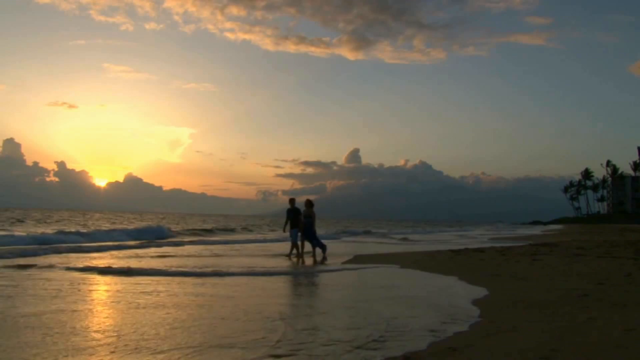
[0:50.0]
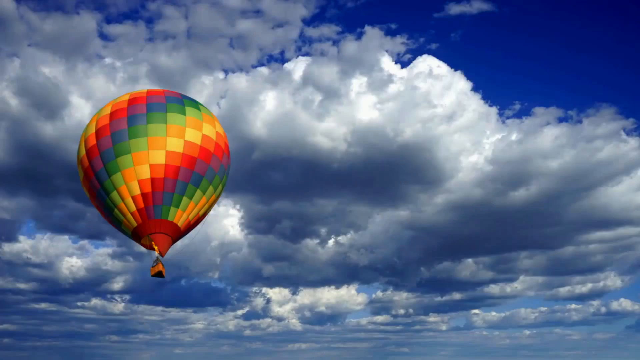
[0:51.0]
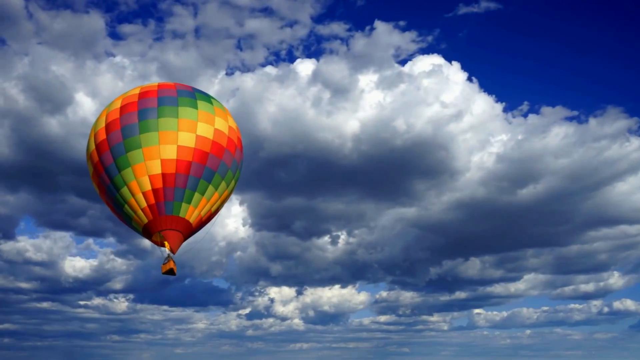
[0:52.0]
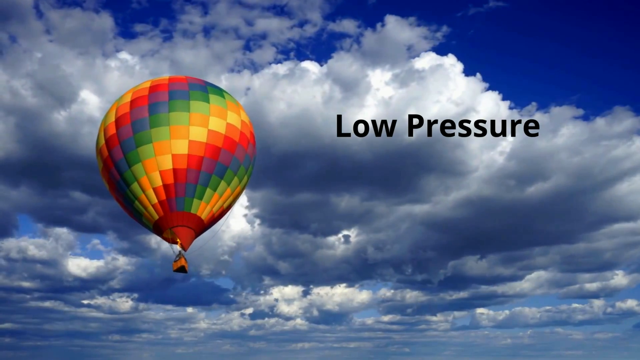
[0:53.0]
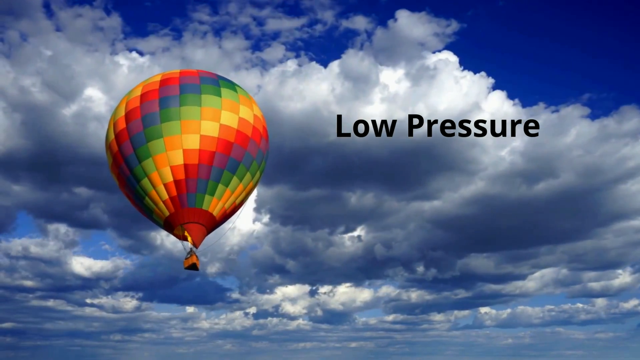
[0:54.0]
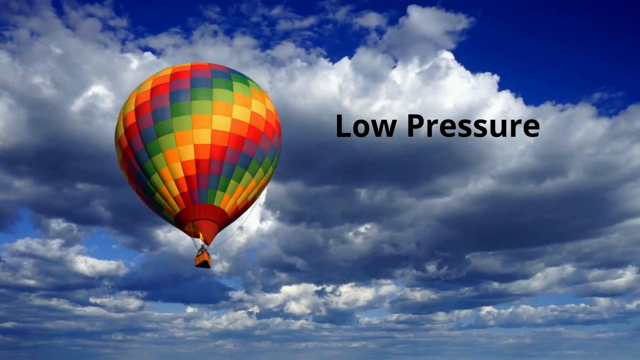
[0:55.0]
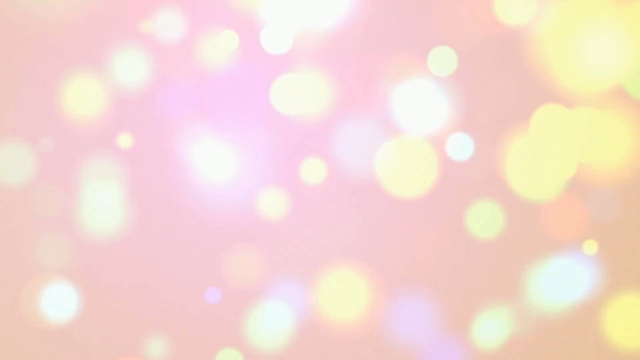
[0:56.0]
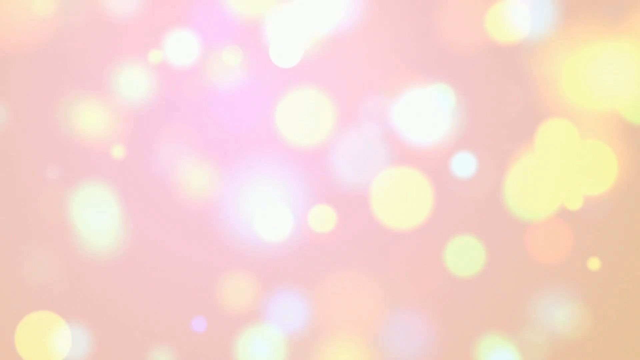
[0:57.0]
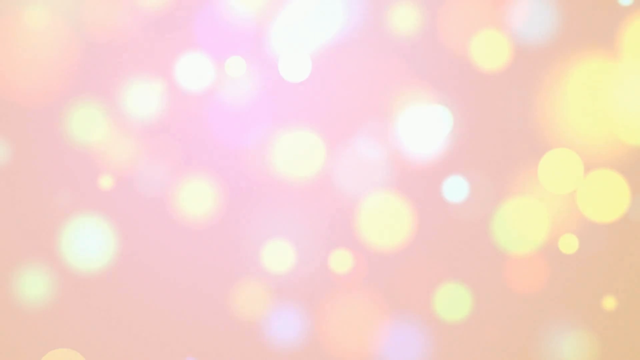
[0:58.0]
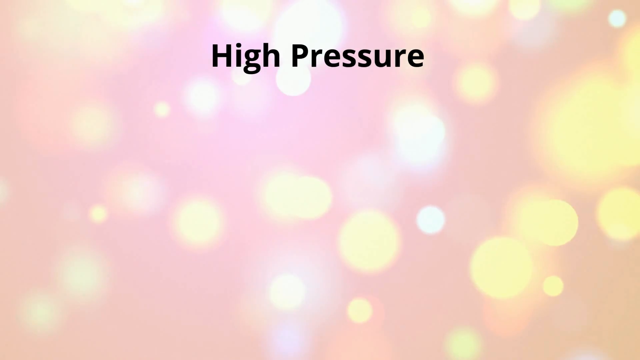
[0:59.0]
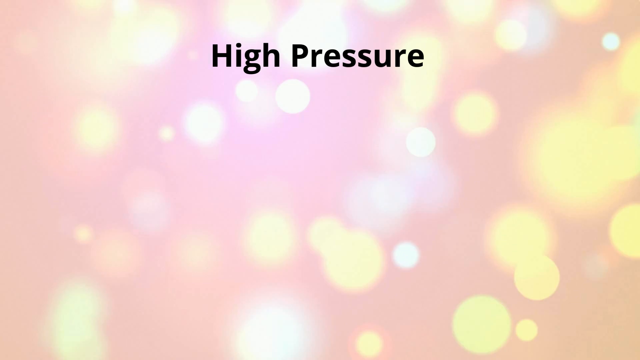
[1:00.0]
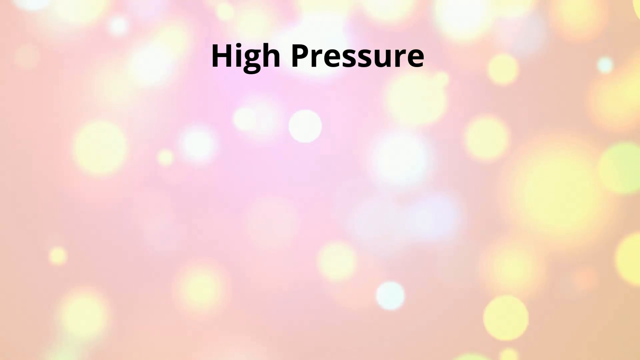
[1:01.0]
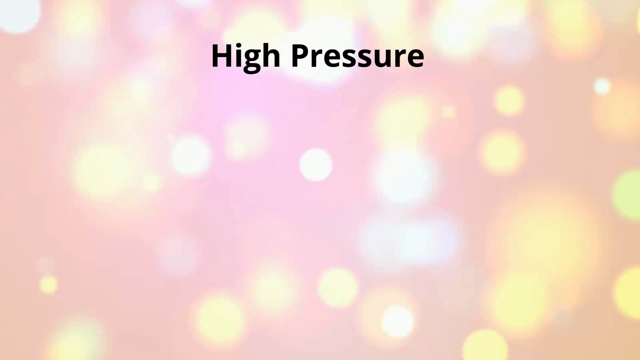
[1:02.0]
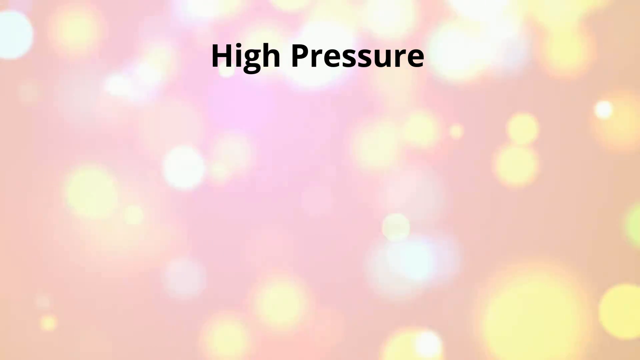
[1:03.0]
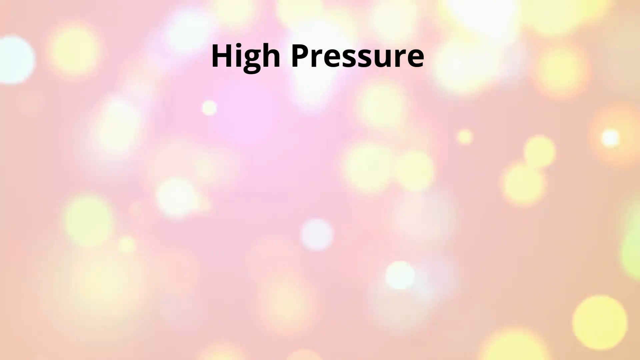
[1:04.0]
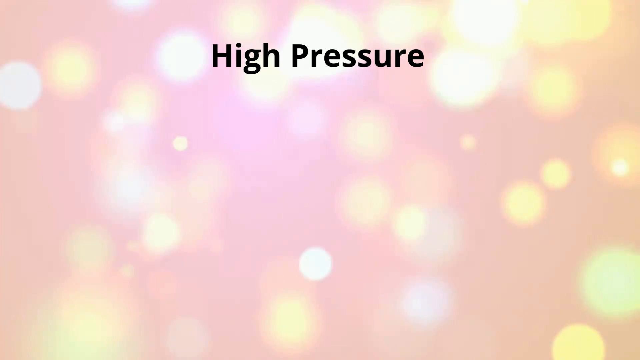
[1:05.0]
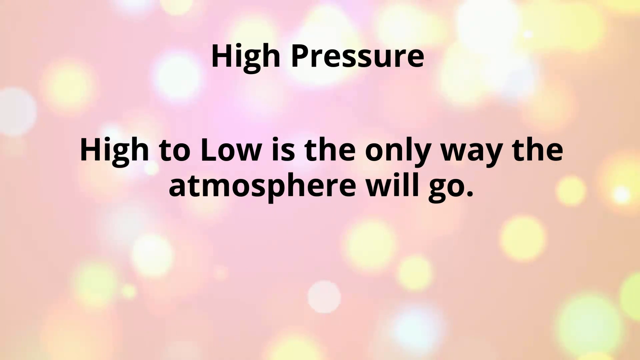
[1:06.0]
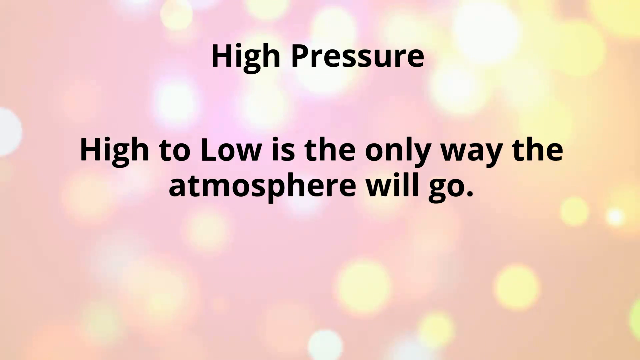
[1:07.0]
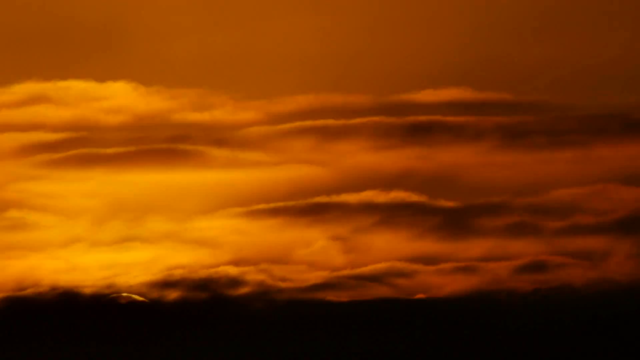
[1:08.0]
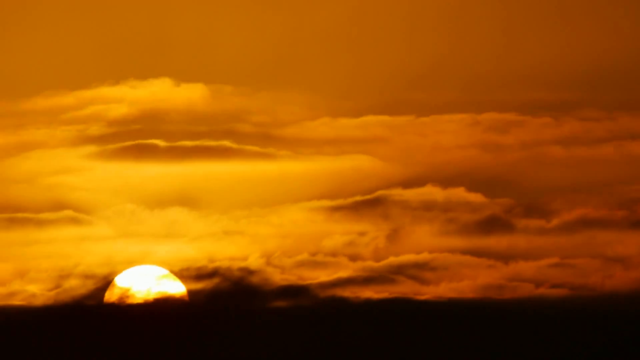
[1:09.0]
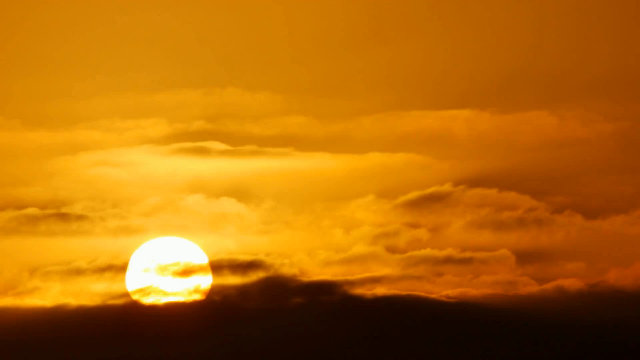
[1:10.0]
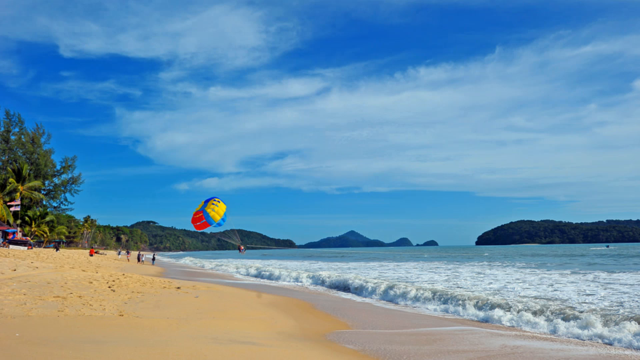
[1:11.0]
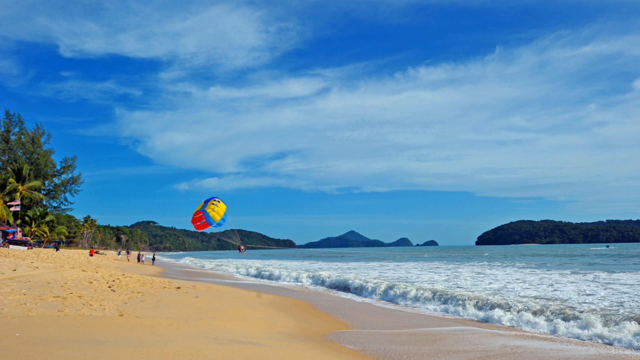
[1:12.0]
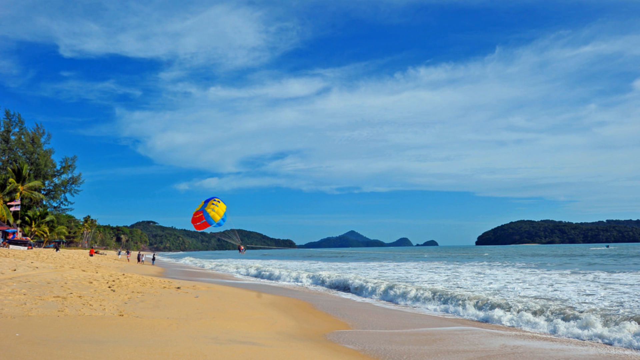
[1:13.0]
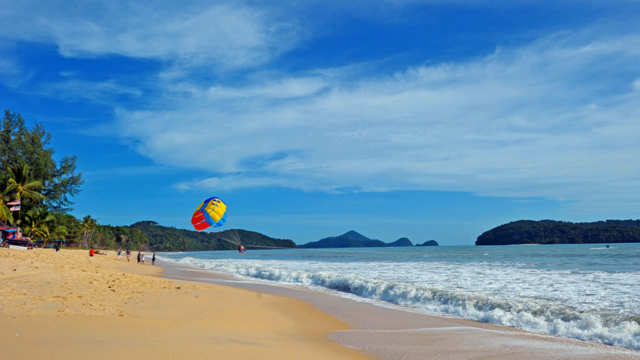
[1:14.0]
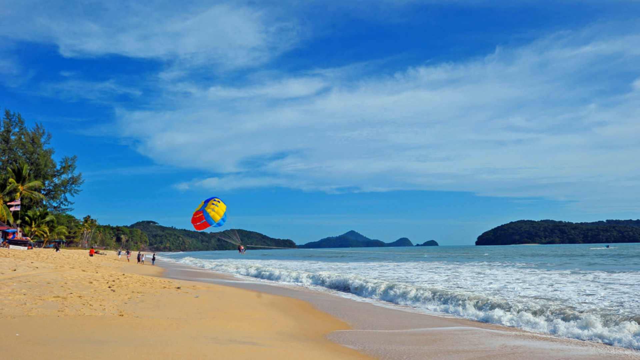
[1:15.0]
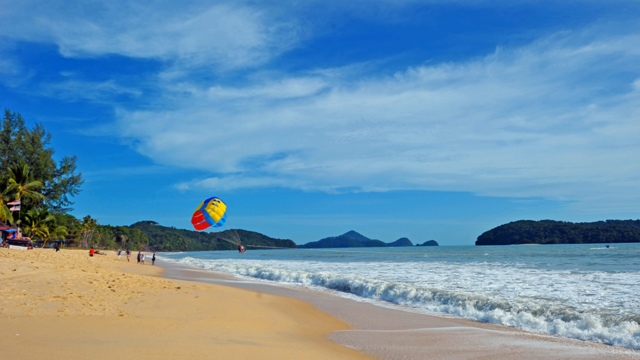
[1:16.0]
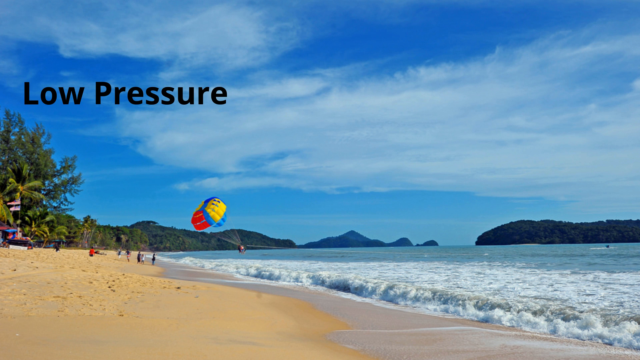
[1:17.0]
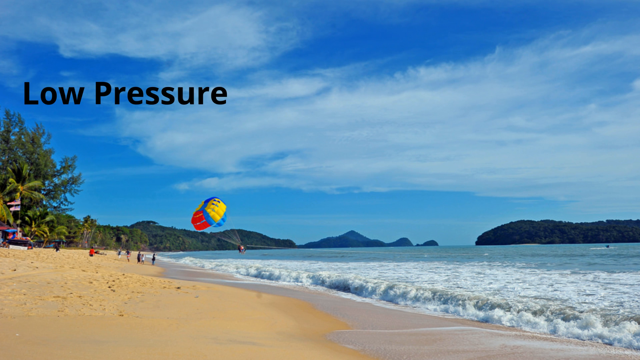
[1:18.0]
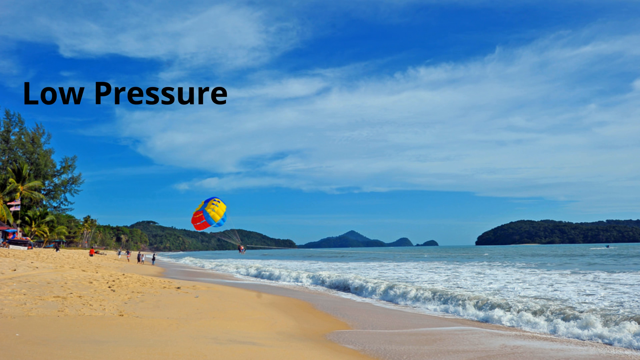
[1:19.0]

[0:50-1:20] The couple continues walking along the beach at sunset. A colorful hot air balloon with a rainbow pattern in a square diagonal design floats in the sky. Behind it is a very cloudy sky with blue peeking through the clouds. The balloon slowly floats along and looks as though it is coming toward the camera. The words "low pressure" appear in black text on the right side of the screen. What appears to be a close sparkle transition follows, and the words "high pressure" appear in black text at the top of the screen while the sparkle effect continues. The background is orange and pink, and the sparkles are orange, yellow, and white. In the center of the screen, the text "high to low is the only way the atmosphere will go" appears in black. The same sunrise footage from earlier is shown once again, with the sun coming up over an orange sky. A beach scene follows: in the distance a large group of people sits on the beach, and someone paraglides over the beach with an orange, blue, and yellow parasail. Behind them are lots of palm trees and blue skies with a few clouds. The text "low pressure" appears in black on the left-hand side of the screen.